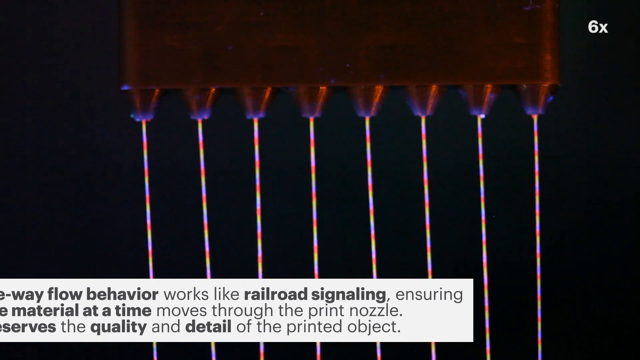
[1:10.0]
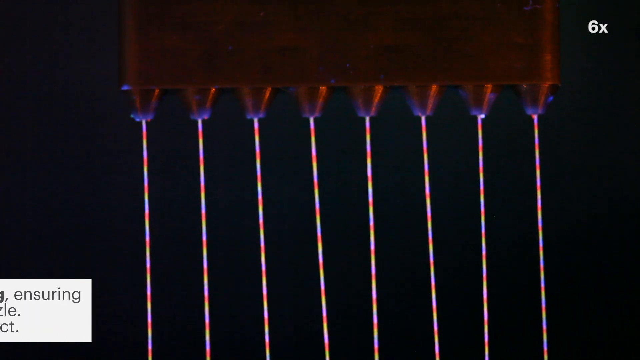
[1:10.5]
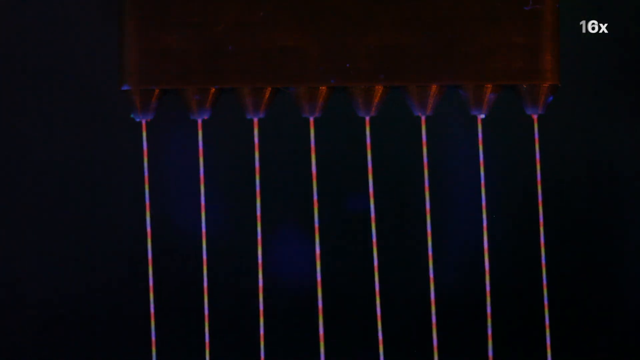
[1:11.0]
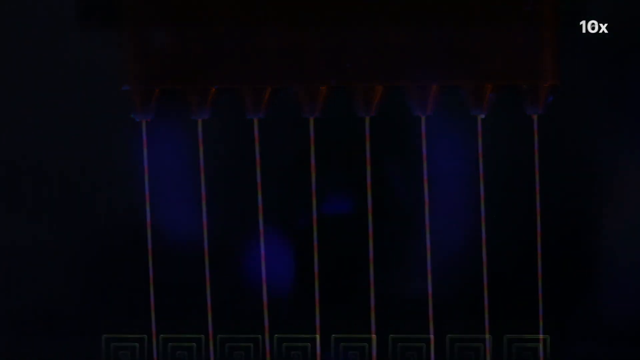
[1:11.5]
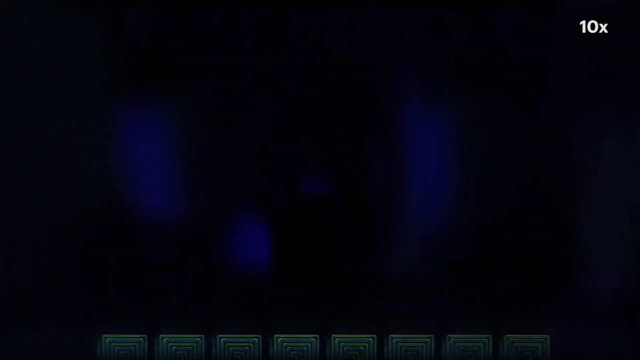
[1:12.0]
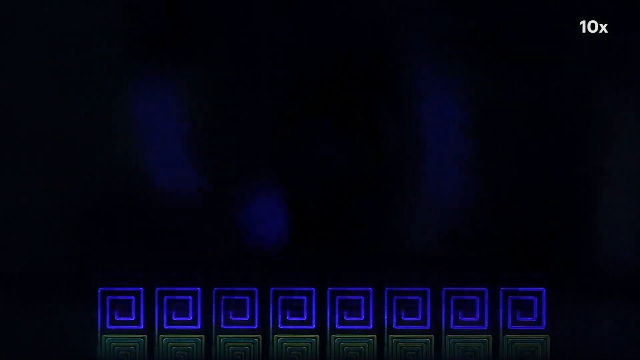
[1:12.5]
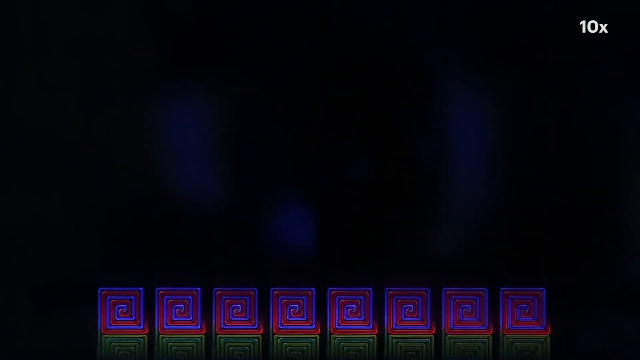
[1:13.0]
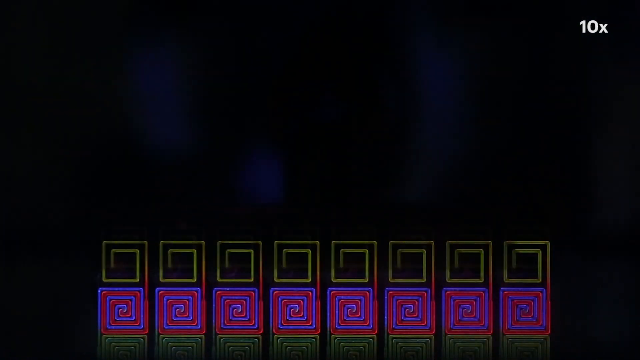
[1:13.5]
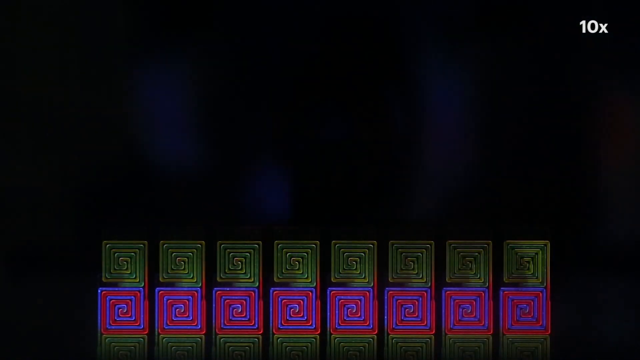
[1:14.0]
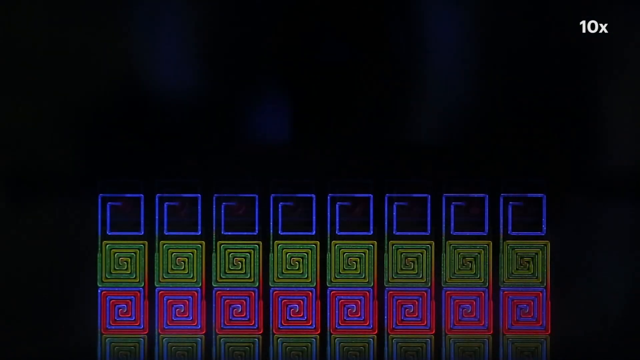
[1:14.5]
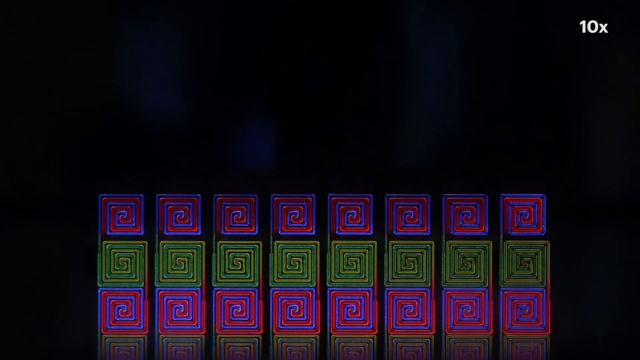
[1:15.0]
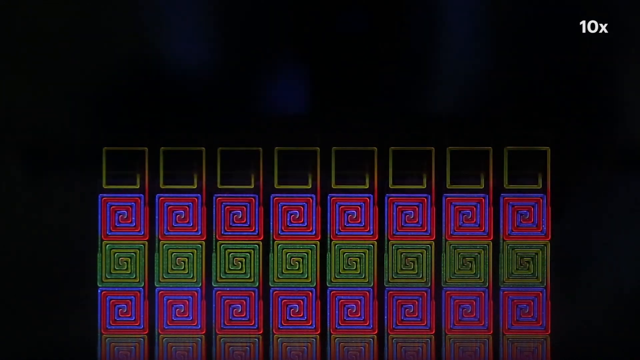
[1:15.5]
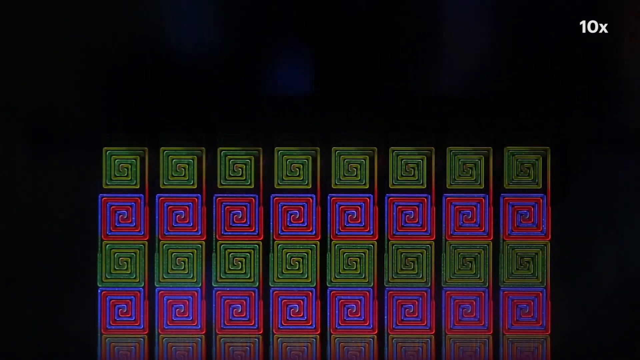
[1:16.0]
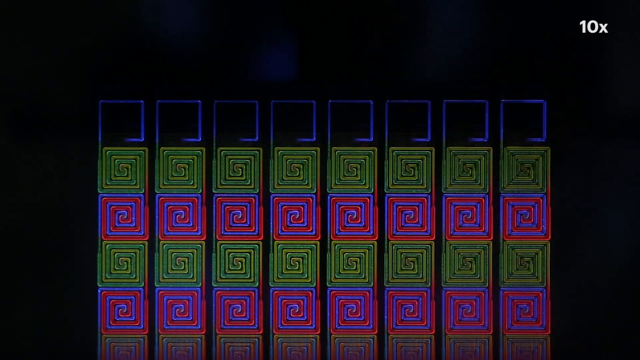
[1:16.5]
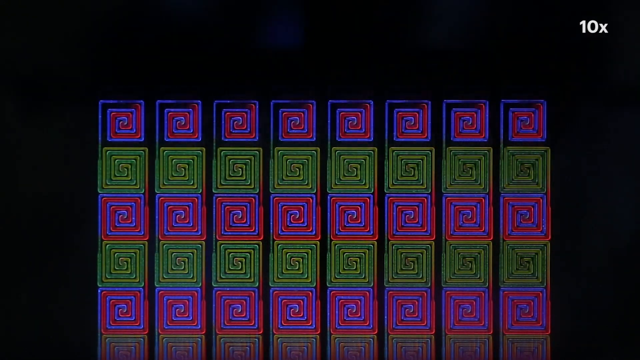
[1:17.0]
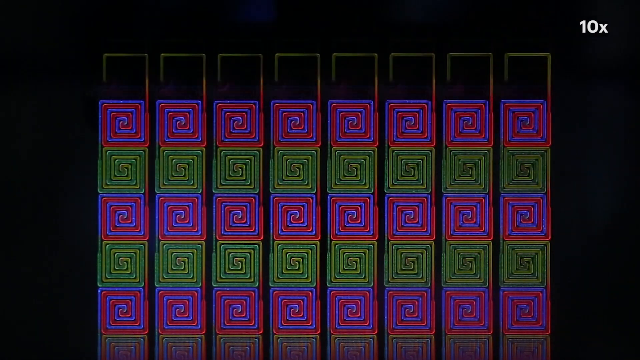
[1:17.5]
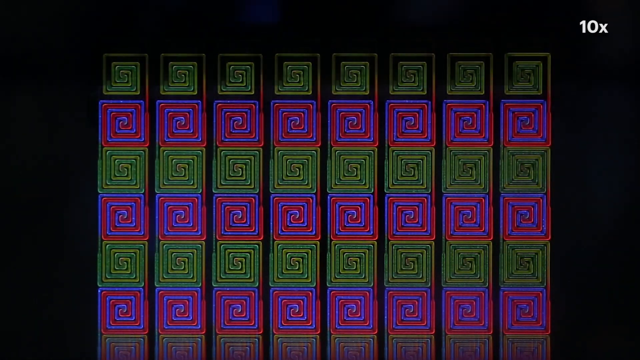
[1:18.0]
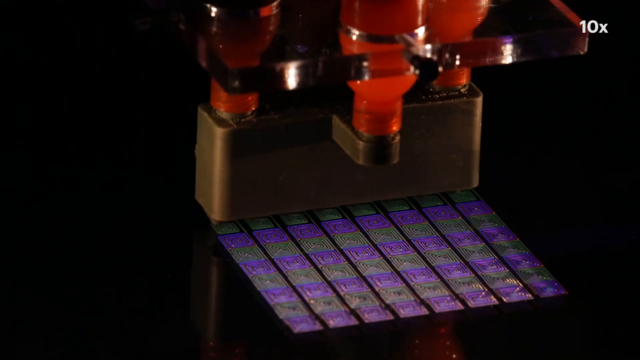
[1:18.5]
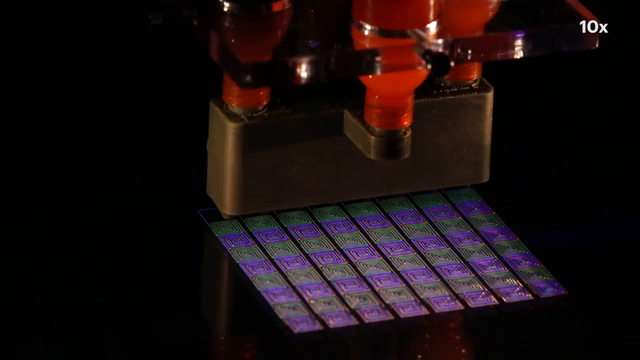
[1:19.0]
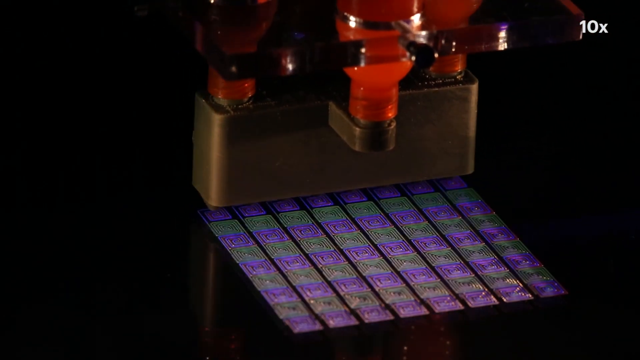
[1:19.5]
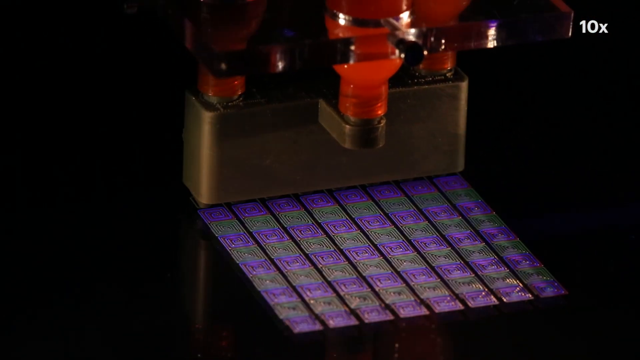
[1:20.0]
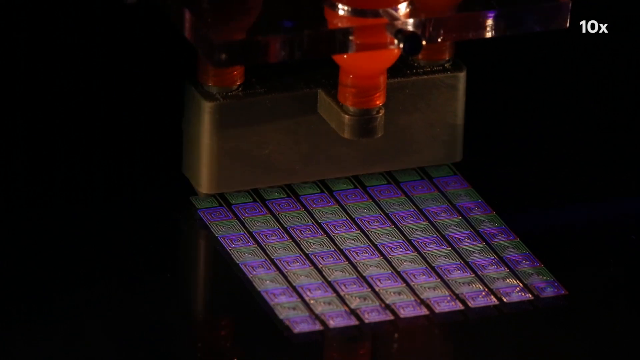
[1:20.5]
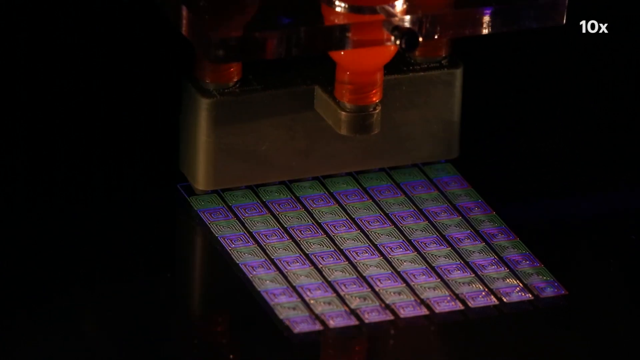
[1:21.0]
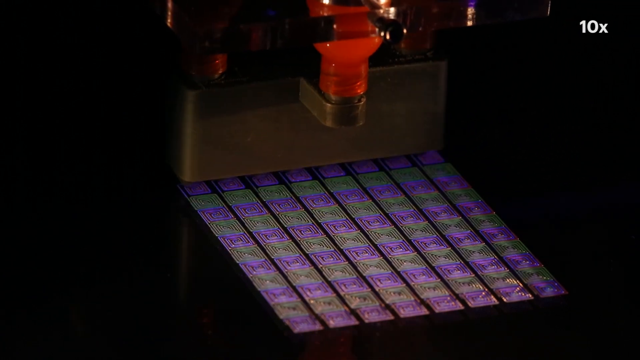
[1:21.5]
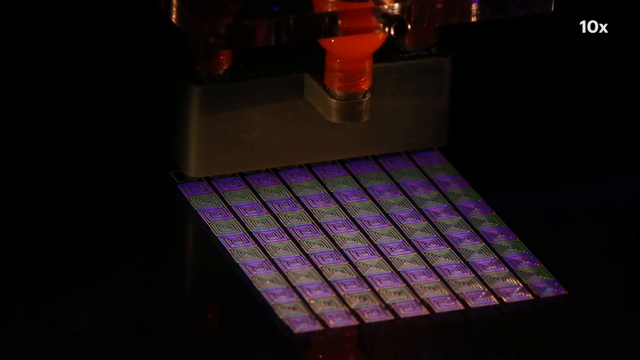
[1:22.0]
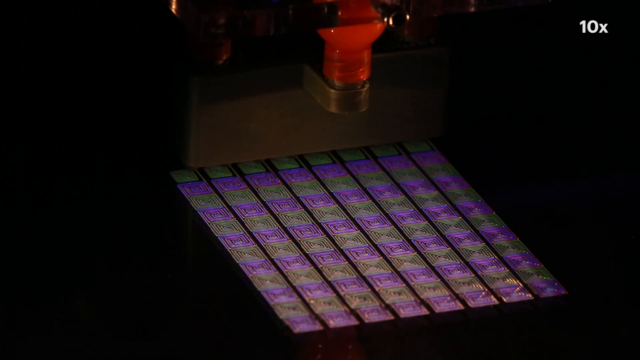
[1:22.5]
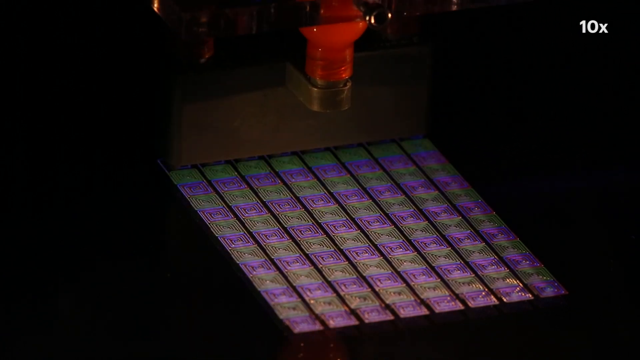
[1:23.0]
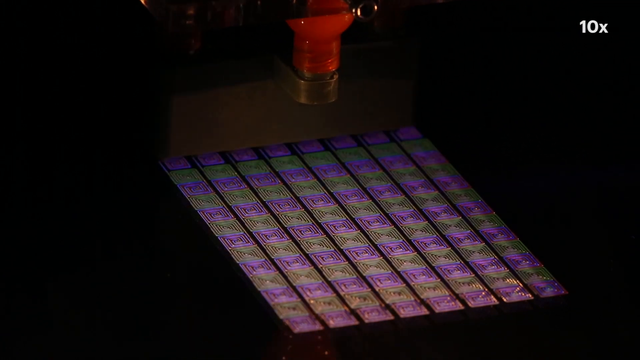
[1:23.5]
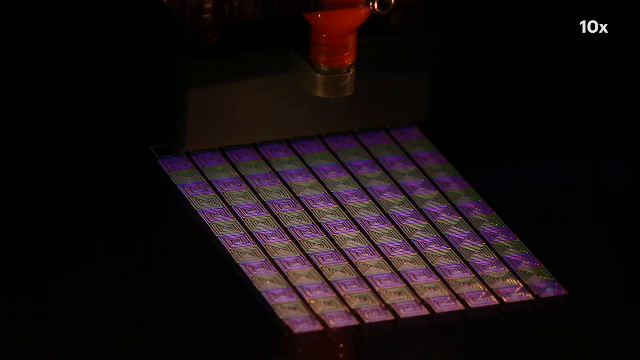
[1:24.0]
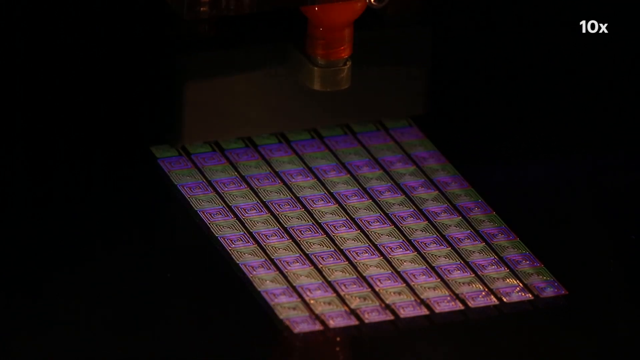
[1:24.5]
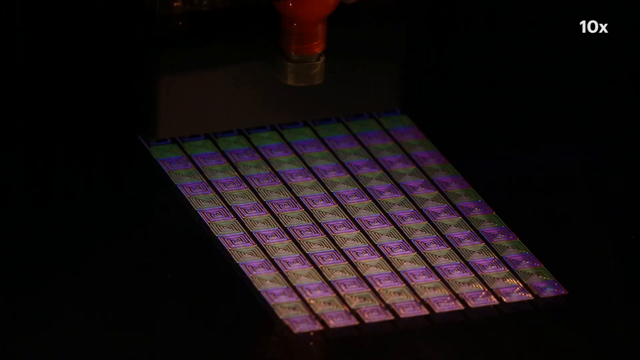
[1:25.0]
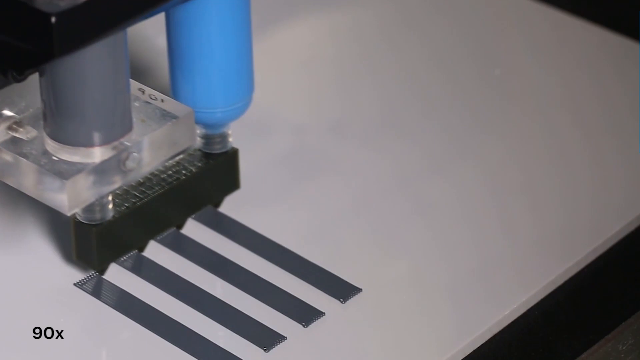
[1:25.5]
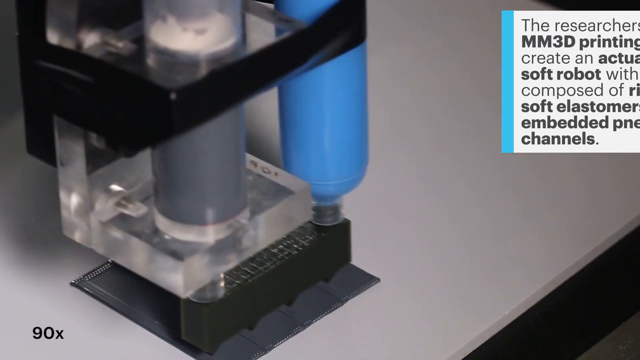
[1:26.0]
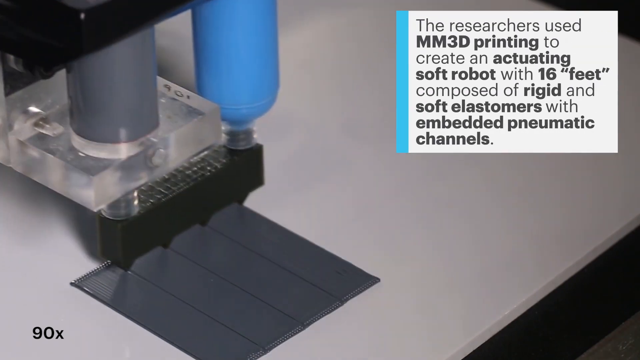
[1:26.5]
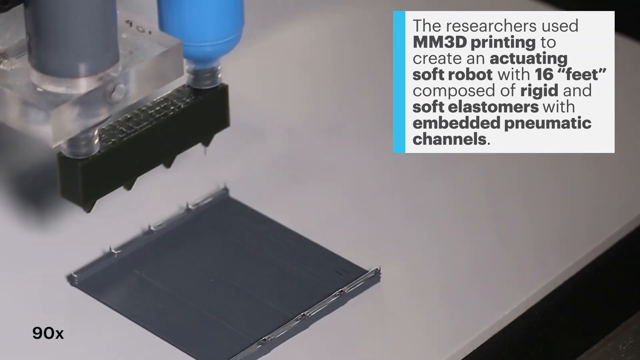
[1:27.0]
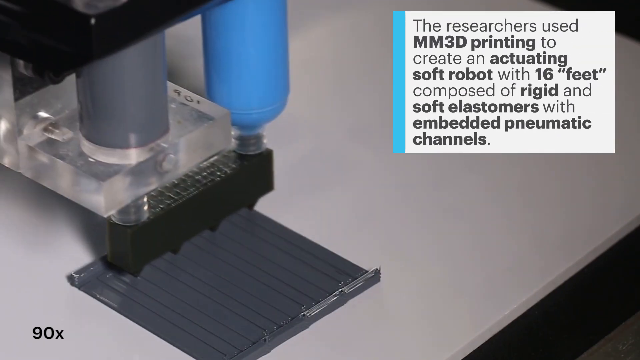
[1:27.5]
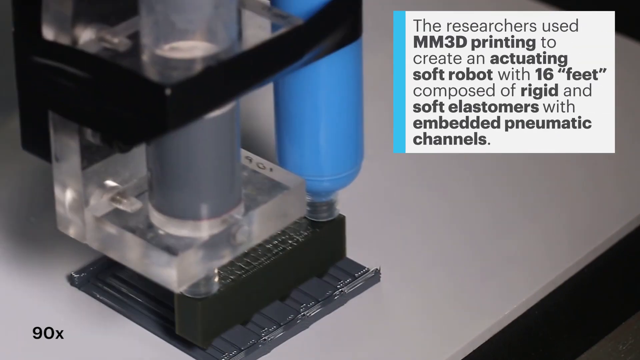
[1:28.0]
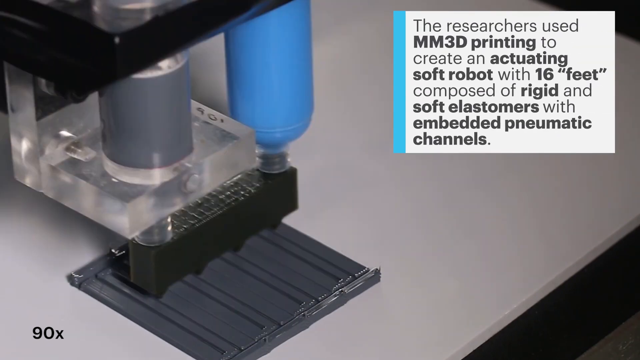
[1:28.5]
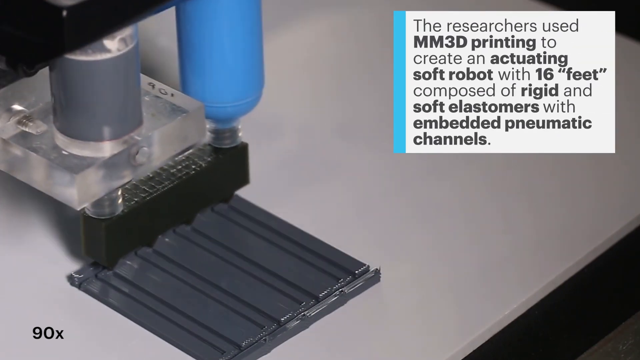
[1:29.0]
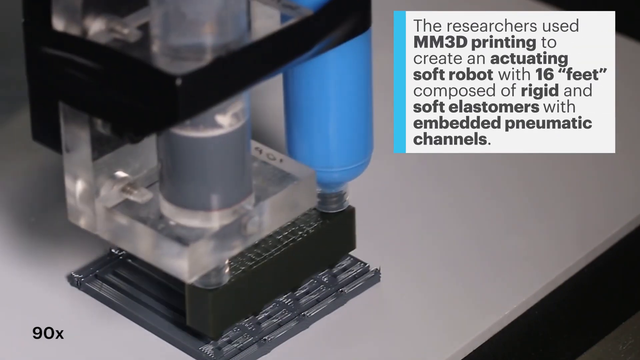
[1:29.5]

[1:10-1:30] The rapidly changing print nozzles are shown again. A series of geometric designs with a lot of fine detail then appears on the page in a sequence: red and purple ones, followed by ones in two tones of green, then back to red and purple, and so on. The printhead creates these designs, which may possibly be some kind of circuits. The printer is then shown at work again, with text stating that the researchers used MM3D printing to create an actuating soft robot with 16 feet, composed of rigid and soft elastomers with embedded pneumatic channels.